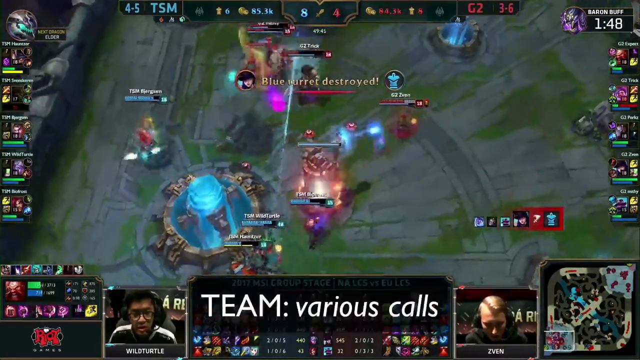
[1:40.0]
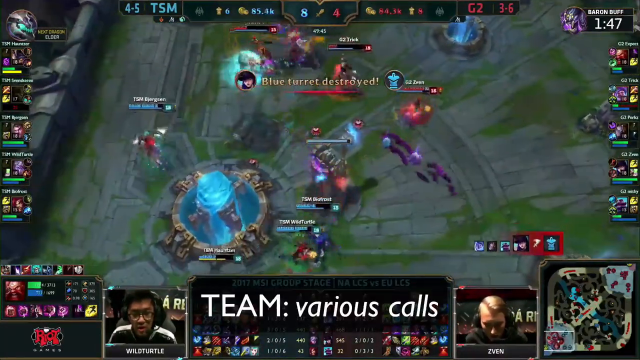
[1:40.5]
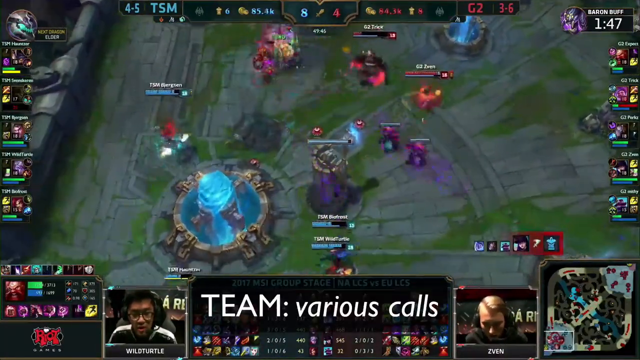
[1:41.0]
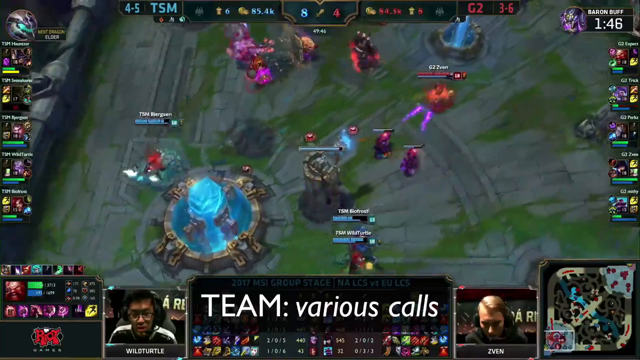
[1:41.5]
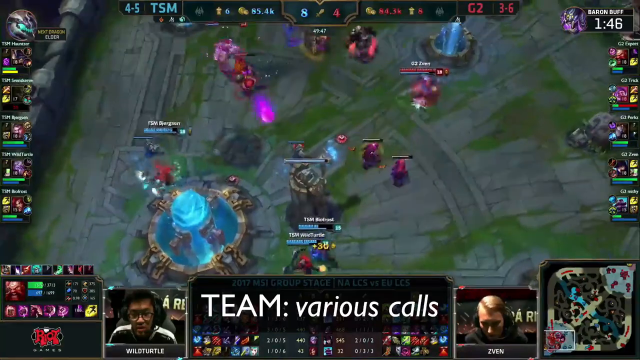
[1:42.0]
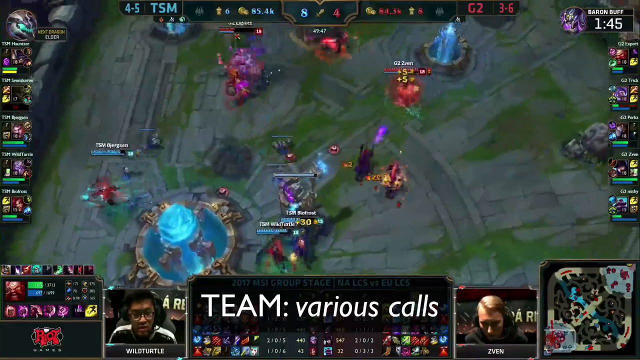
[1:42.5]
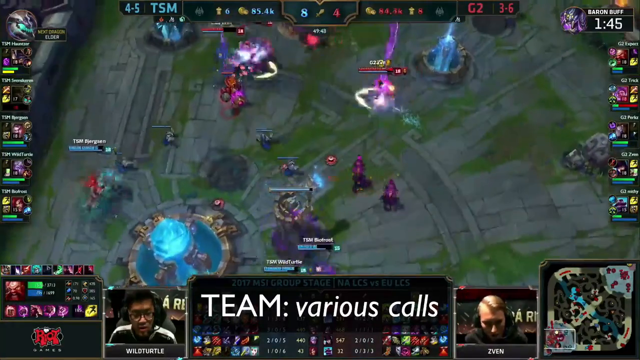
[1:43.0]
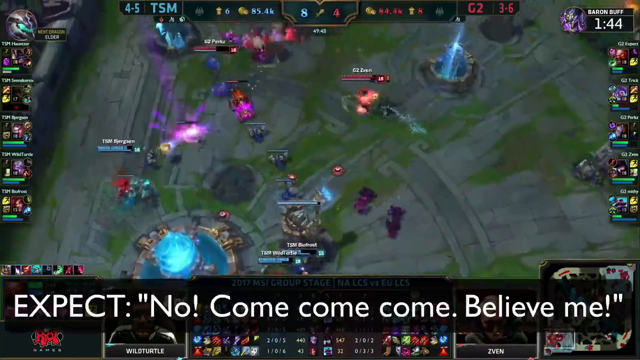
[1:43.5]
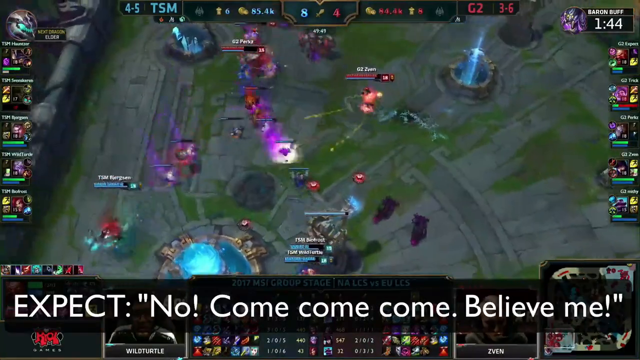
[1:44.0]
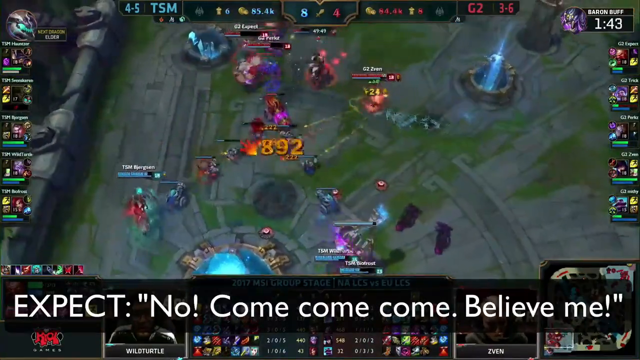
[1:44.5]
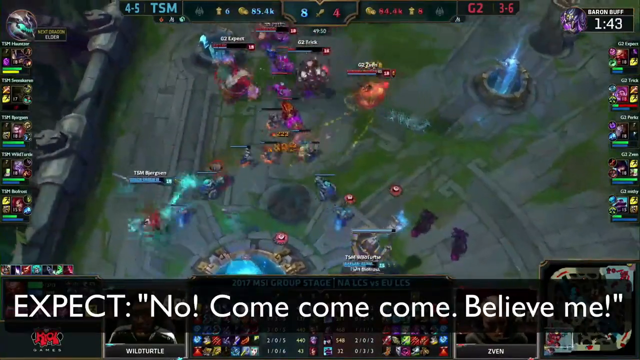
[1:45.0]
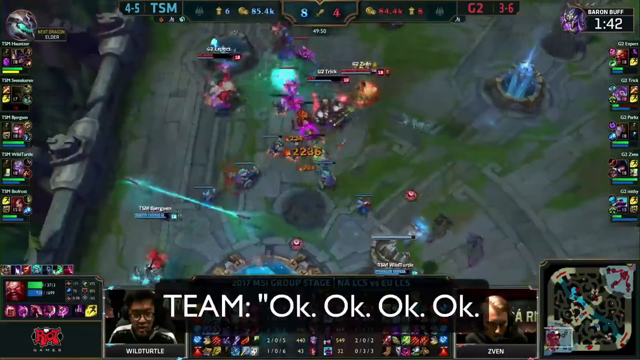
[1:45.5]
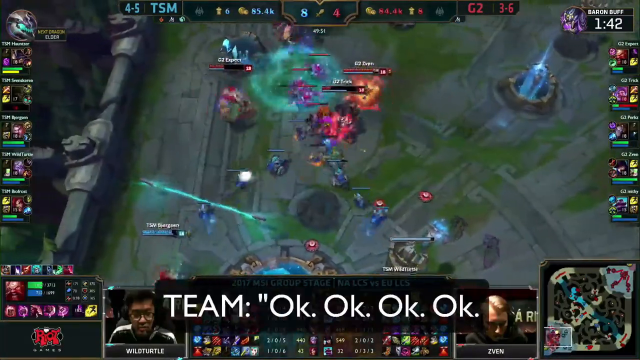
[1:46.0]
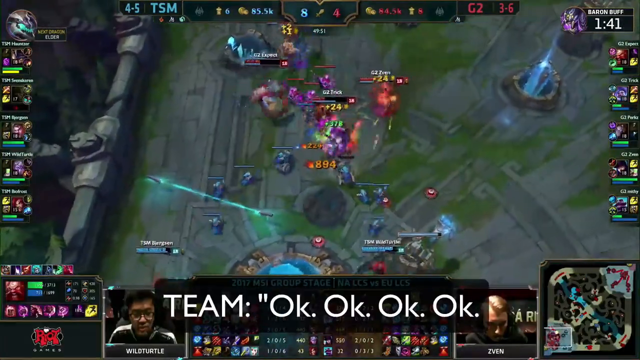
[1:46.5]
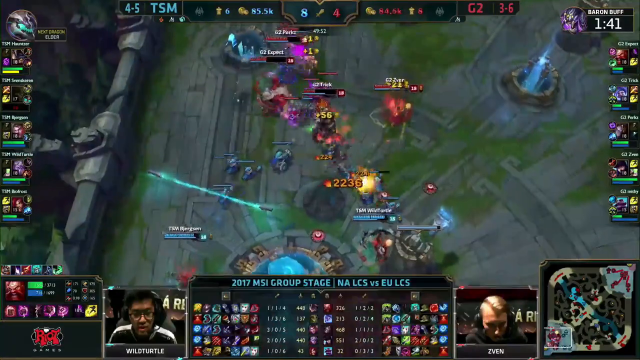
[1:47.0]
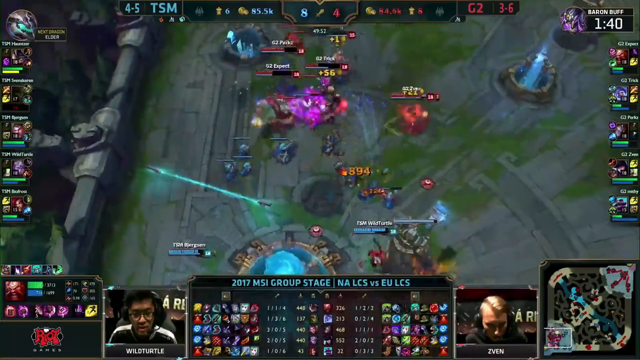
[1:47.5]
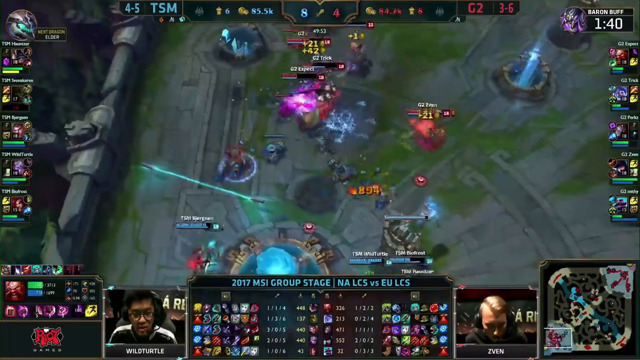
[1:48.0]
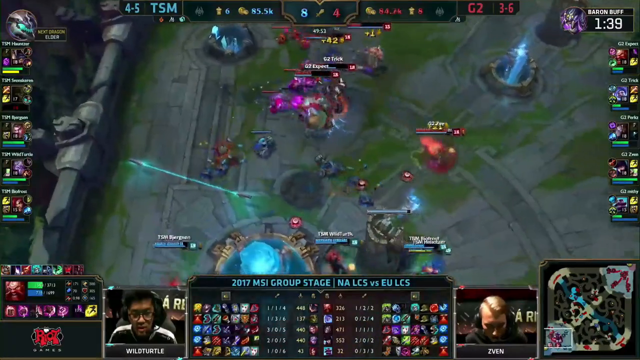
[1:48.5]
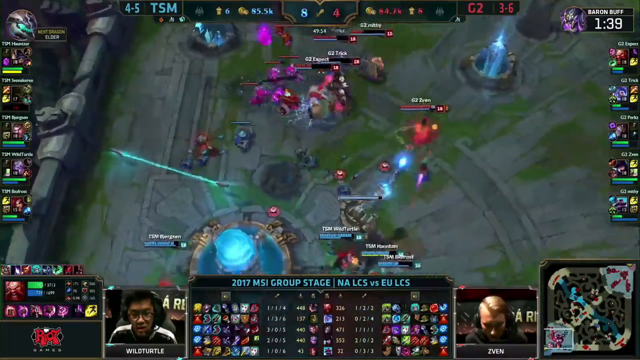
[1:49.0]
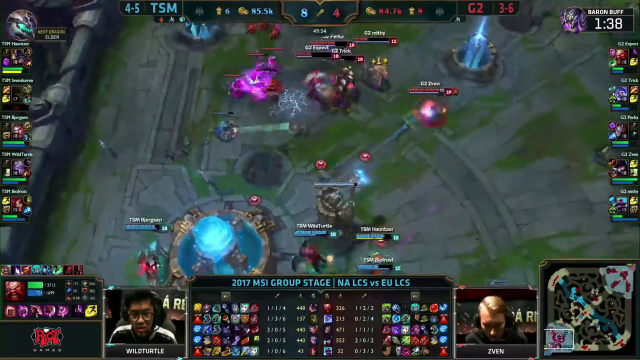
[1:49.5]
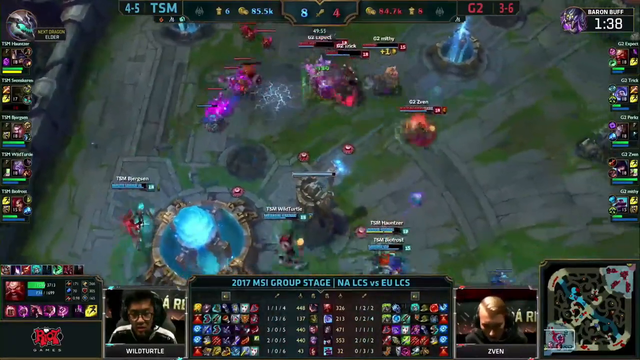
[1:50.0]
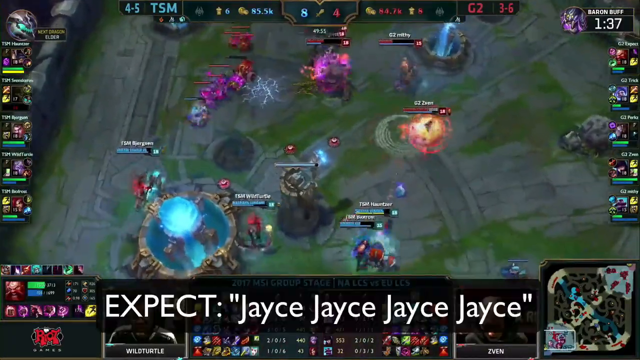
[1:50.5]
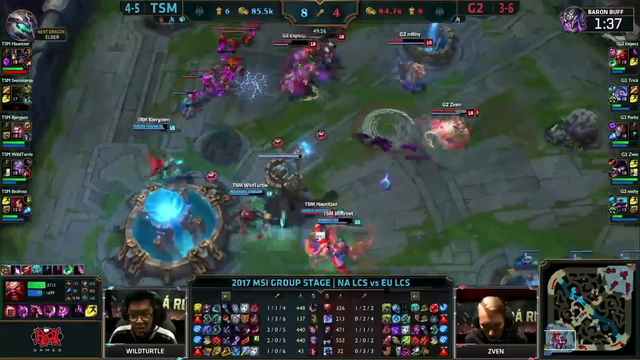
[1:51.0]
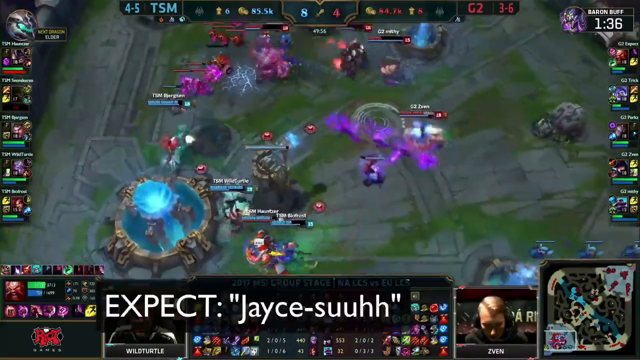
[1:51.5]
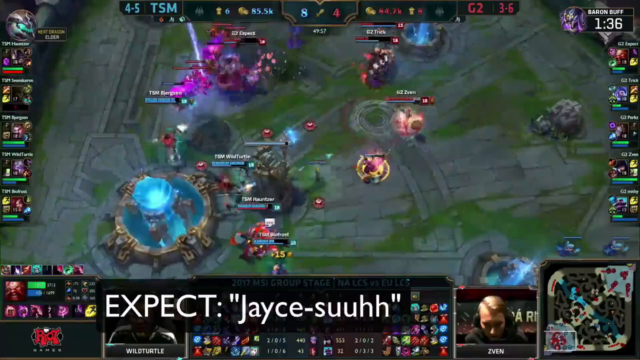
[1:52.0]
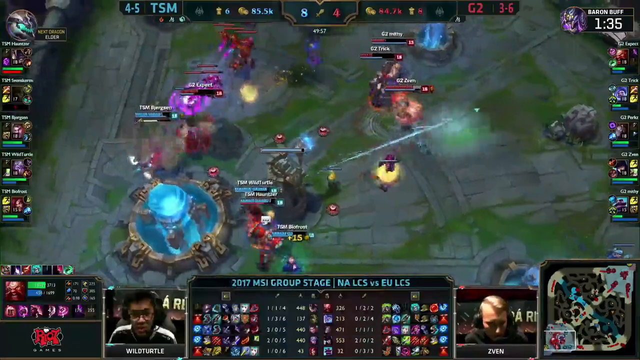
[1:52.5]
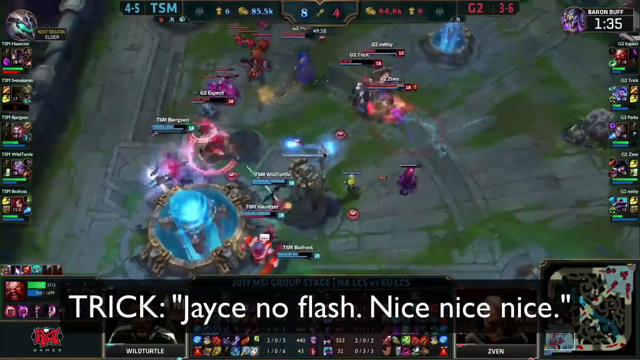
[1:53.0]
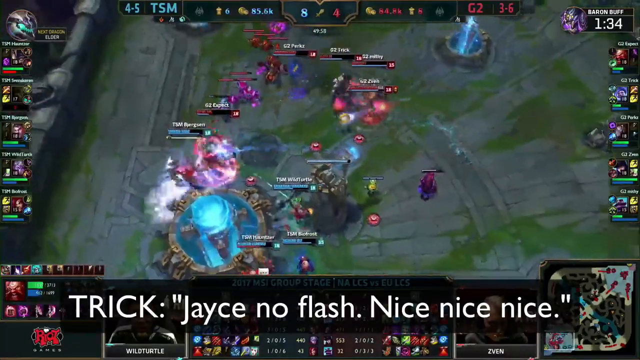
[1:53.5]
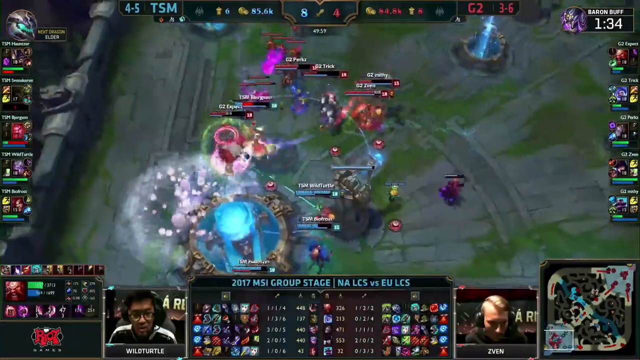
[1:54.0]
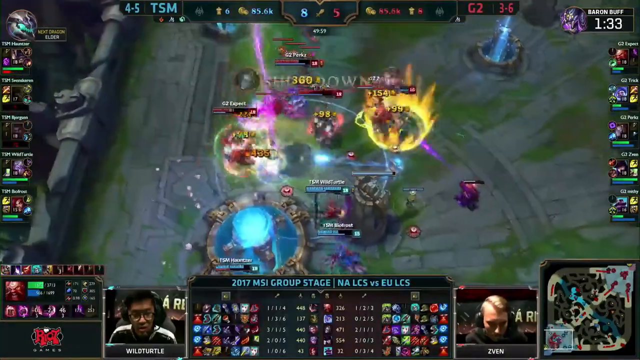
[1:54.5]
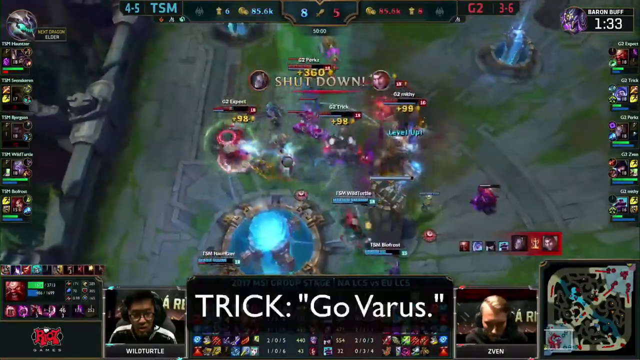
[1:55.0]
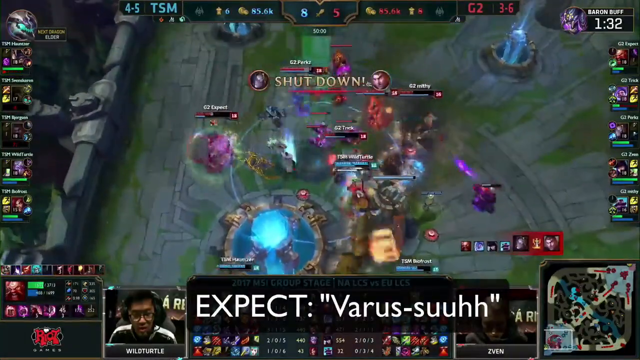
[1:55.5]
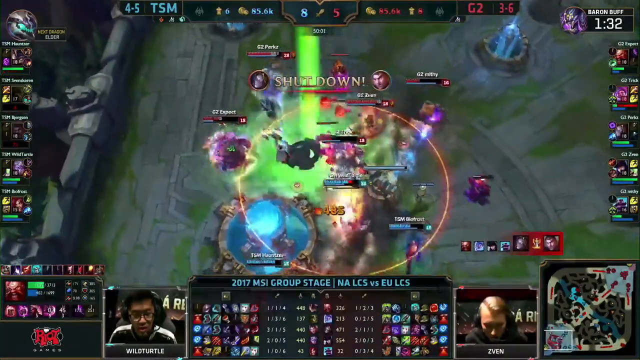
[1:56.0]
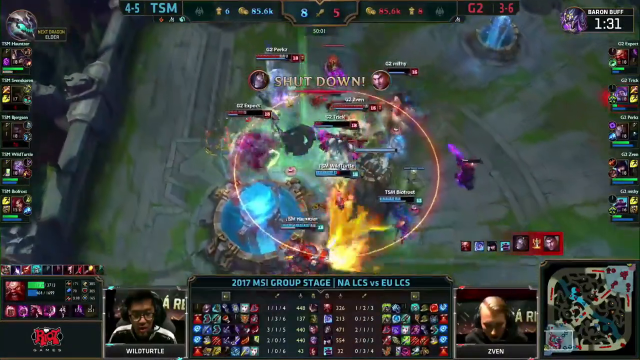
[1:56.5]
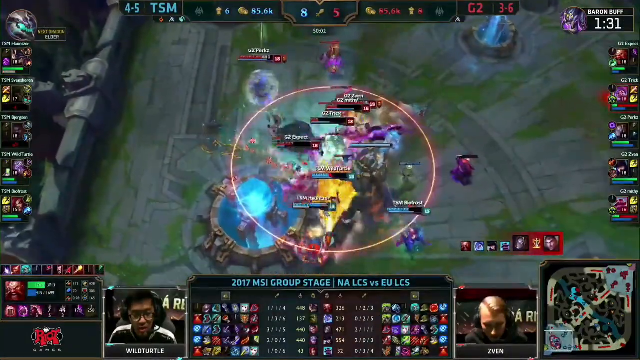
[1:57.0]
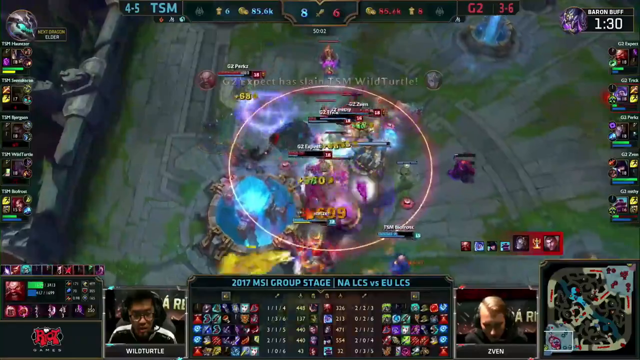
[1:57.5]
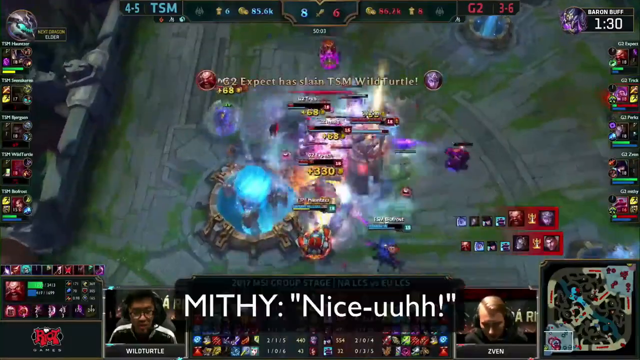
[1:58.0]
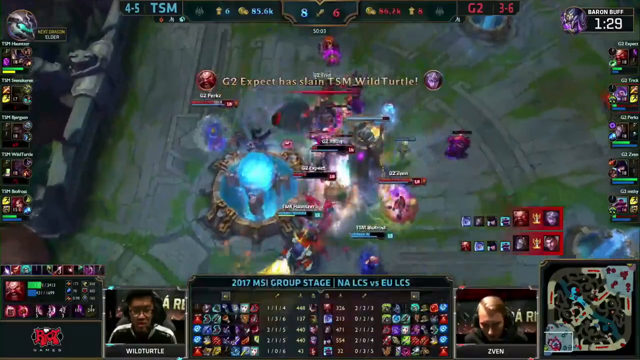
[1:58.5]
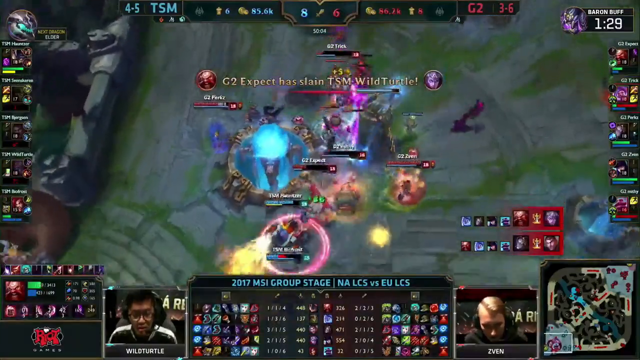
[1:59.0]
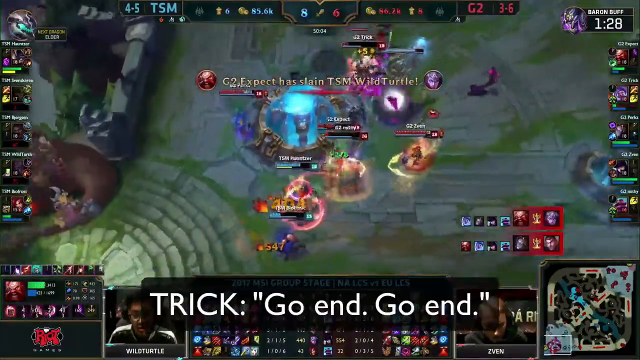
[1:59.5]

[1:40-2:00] As the teams battle in the south, more text appears: "team" with "various calls" in italics; expect says "no come come believe me"; team says "okay" several times; expect says "jace jace jace"; trick says "jace no flash"; mithy says "nice"; and the team says "ah." The battle intensifies as all the characters get very close to each other. The camera pans slowly and slightly to the left, following the action. There are many flame effects and purple magic effects. A big blue gem on top of a large structure appears to be the main objective; it has not yet been damaged, but the towers around it have been taken out one by one. A very large red circle pops up, an area of effect of some kind, and many health bars are visible. "blue barrier destroyed" appears on the screen in gold text.